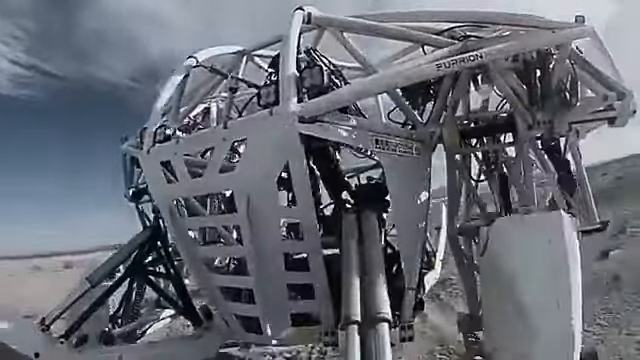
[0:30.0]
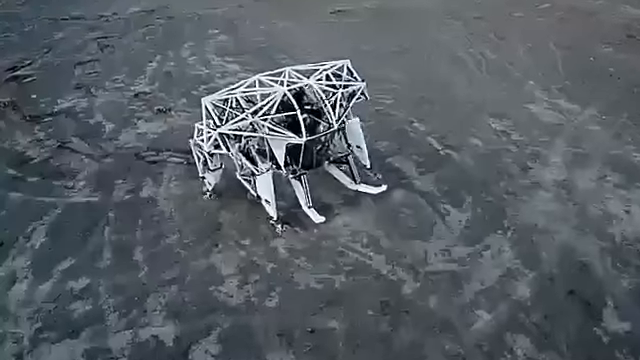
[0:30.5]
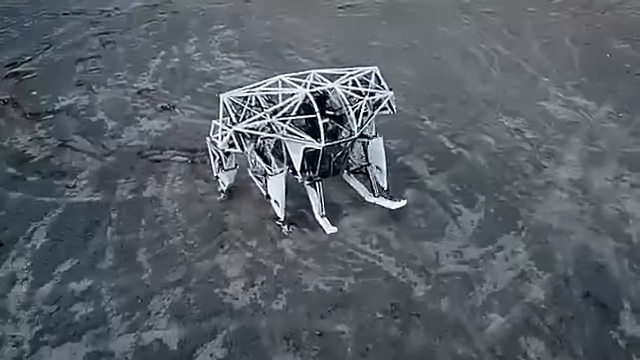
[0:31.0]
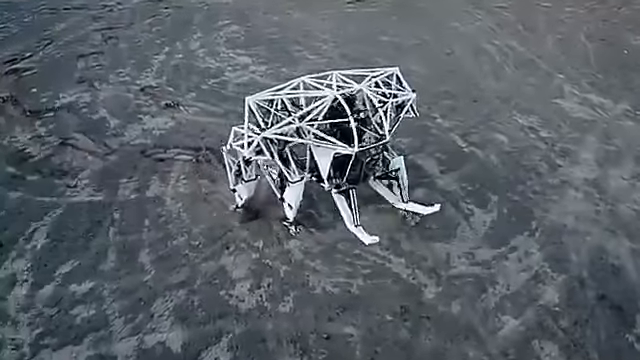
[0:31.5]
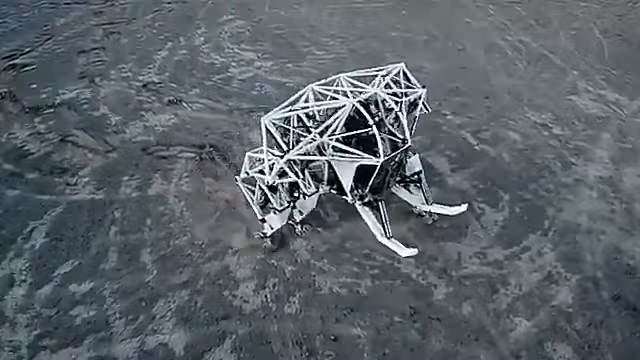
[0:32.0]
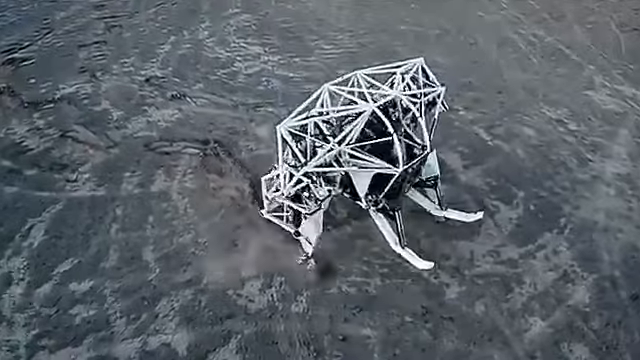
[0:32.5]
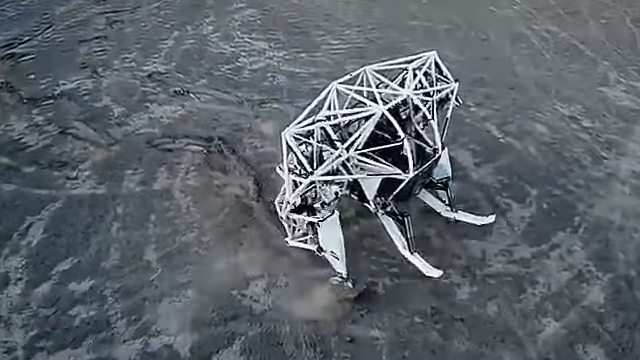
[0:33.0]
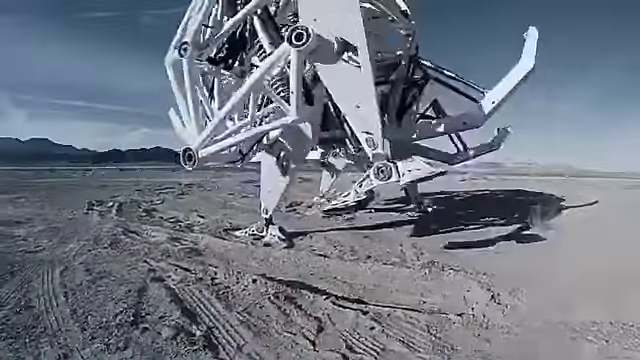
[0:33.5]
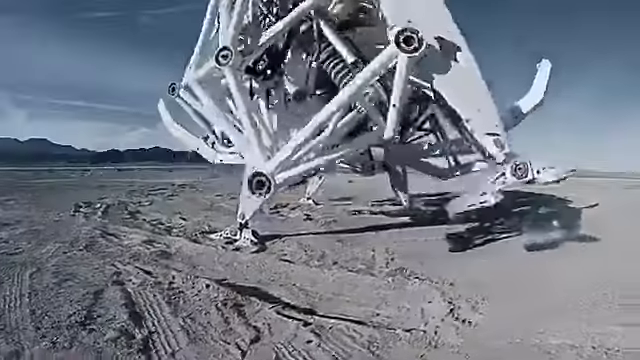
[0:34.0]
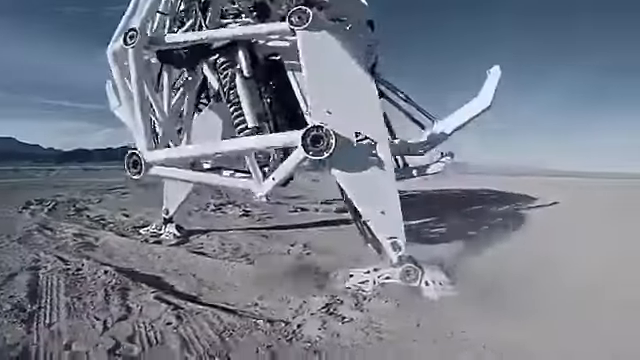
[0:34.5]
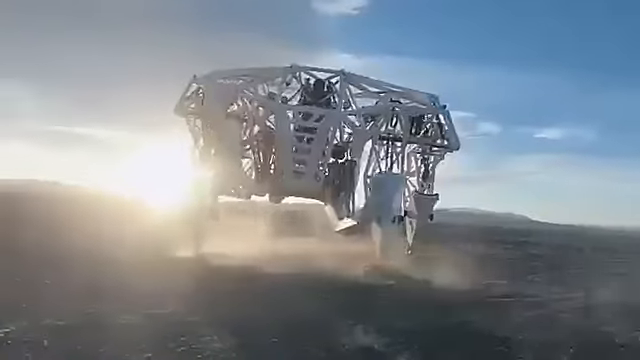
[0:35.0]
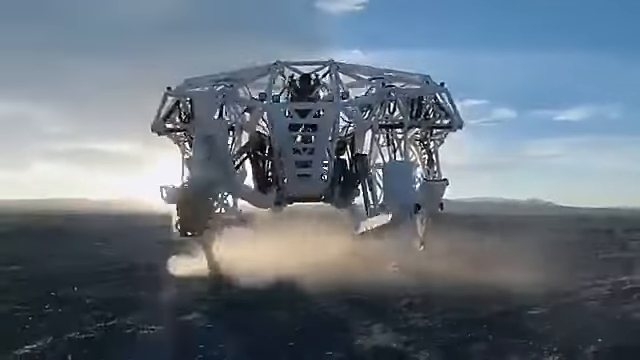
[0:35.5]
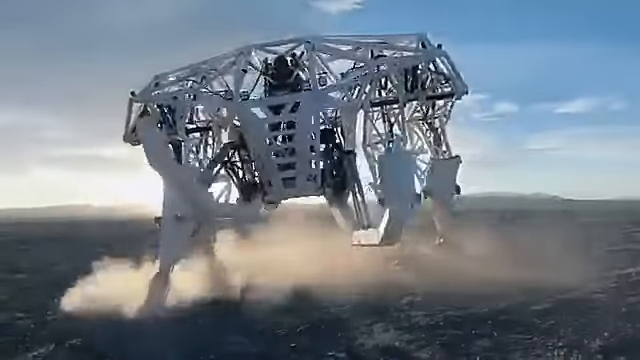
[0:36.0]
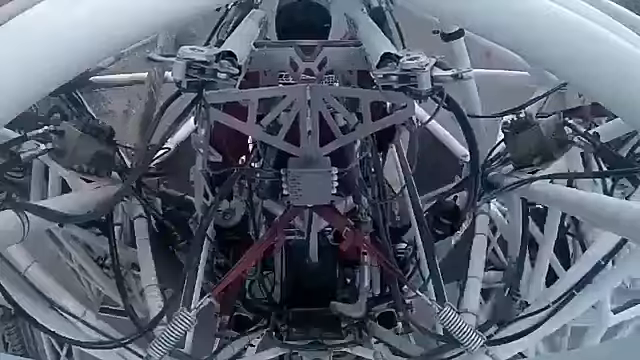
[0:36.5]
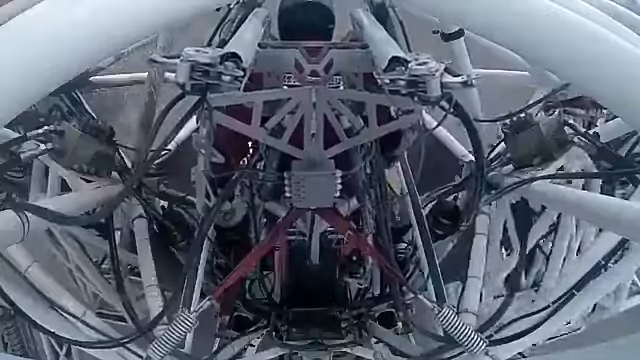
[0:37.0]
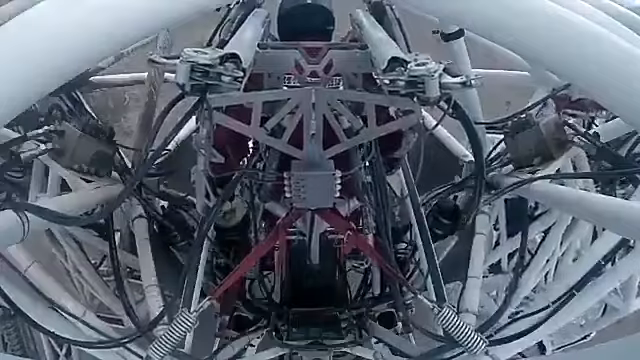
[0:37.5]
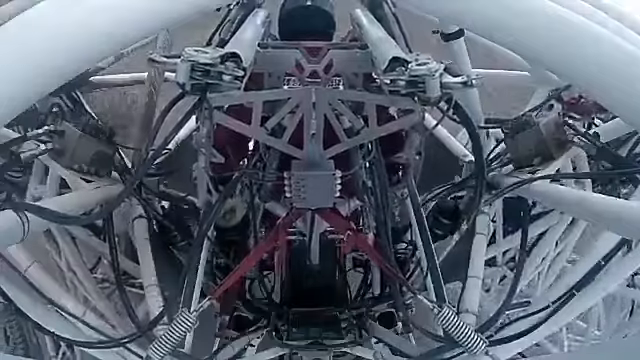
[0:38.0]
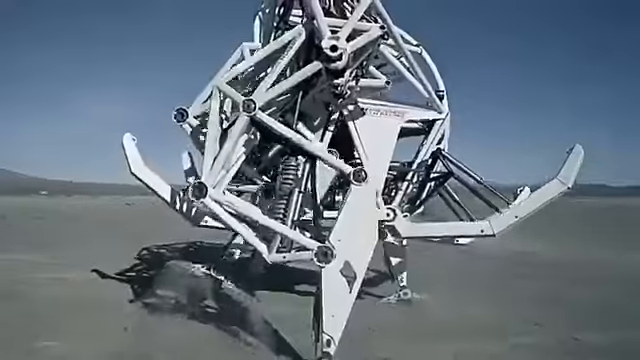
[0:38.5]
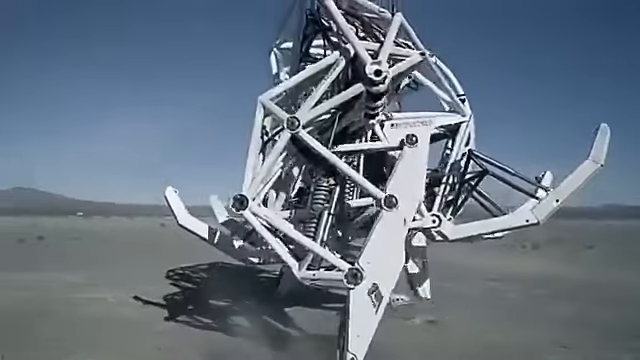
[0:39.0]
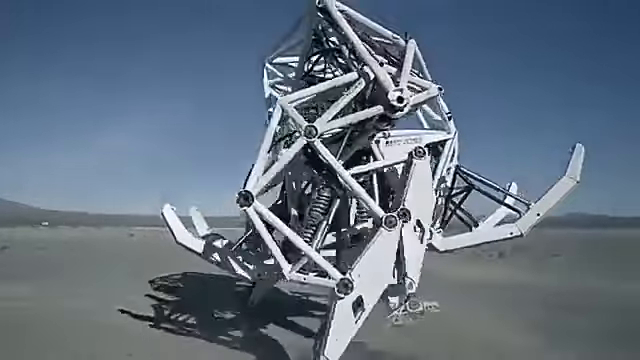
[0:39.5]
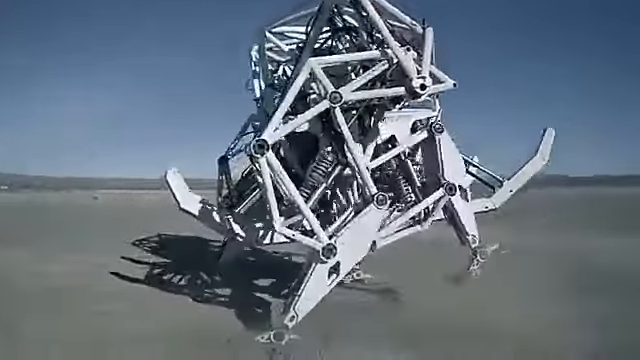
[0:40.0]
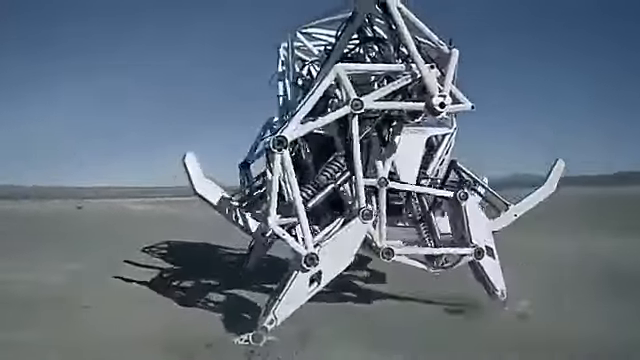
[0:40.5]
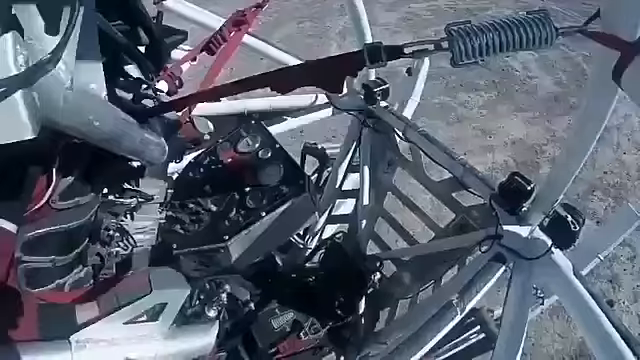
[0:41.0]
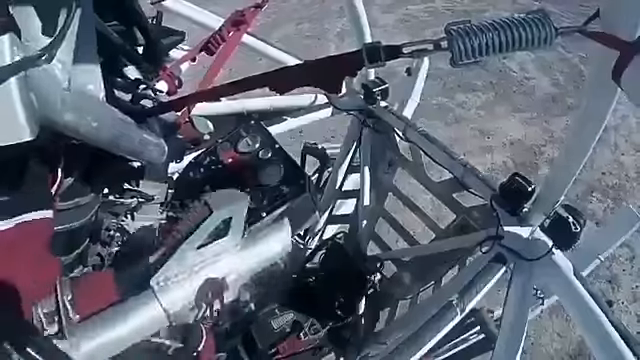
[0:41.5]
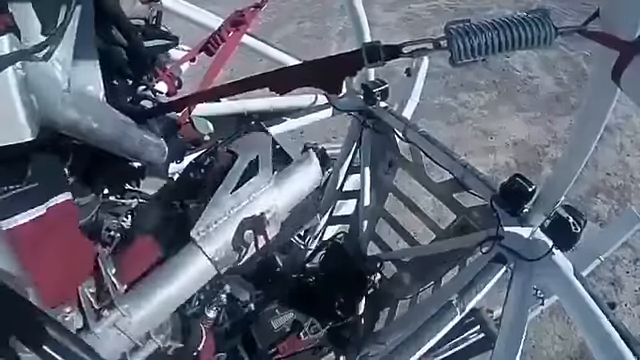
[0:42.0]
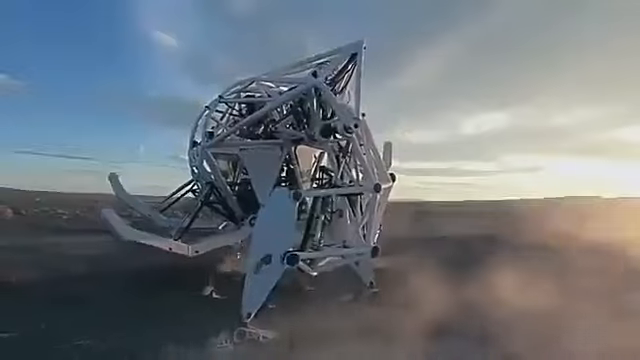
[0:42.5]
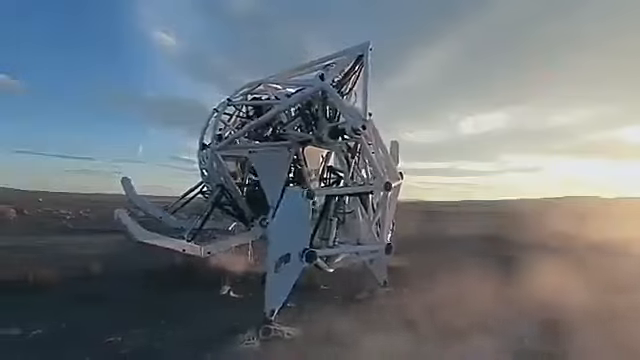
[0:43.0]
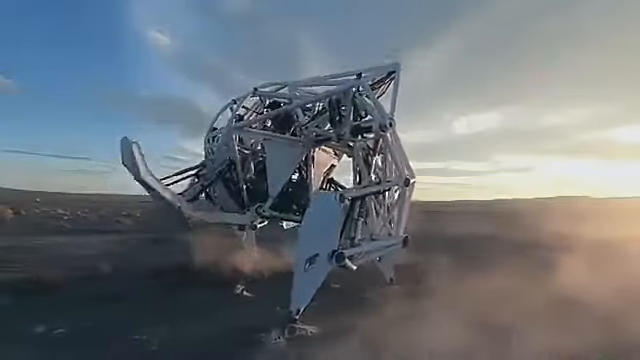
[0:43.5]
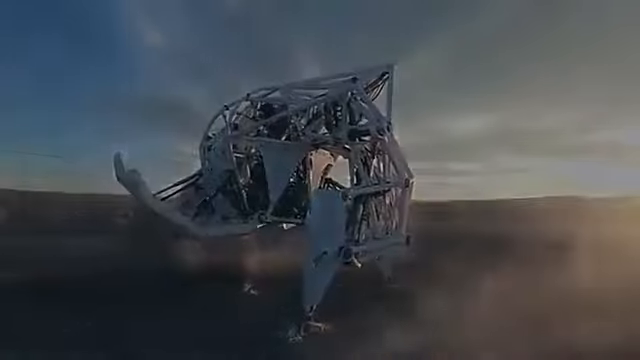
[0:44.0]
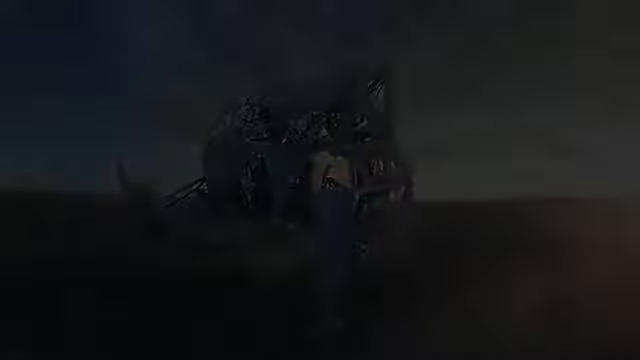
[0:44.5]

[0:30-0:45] The mech walks around, dragging its legs and leaving rifts in the dirt below. Alongside the foot pedals there also seem to be hand controls: the operator appears to have his hand inside a sleeve that seems to be attached to the mech, apparently letting him operate it with the motions of his hands.